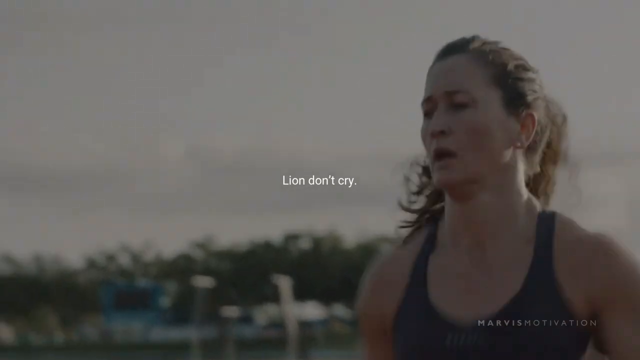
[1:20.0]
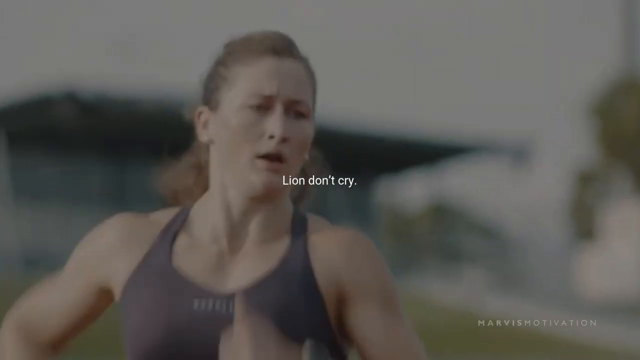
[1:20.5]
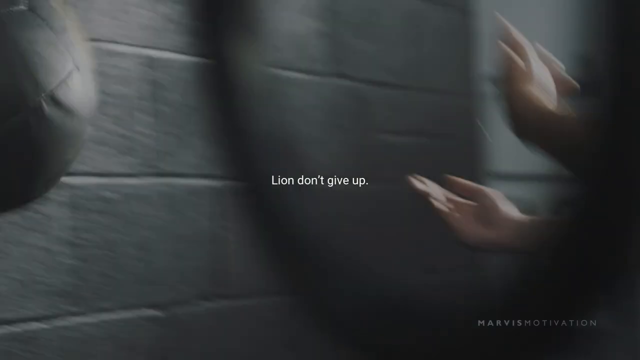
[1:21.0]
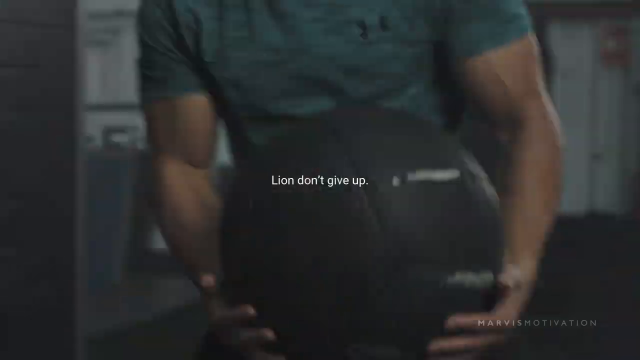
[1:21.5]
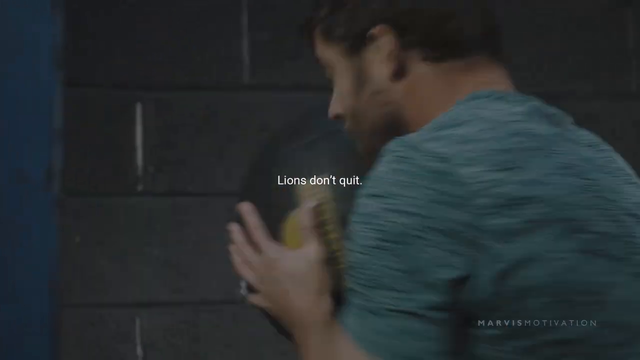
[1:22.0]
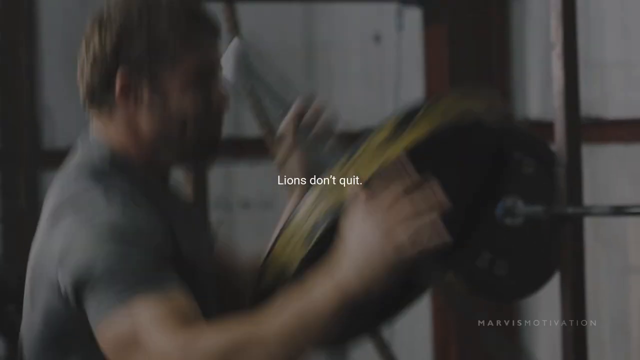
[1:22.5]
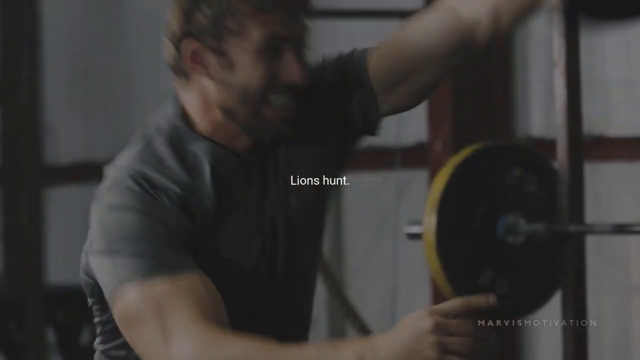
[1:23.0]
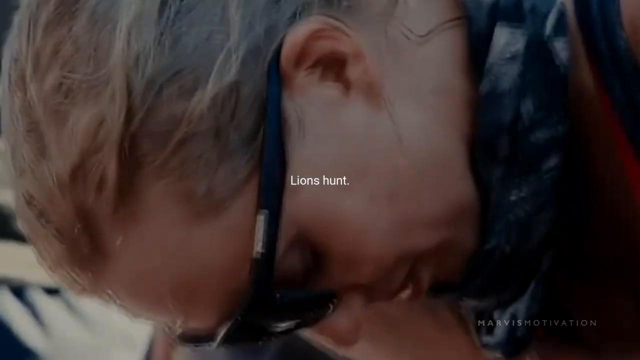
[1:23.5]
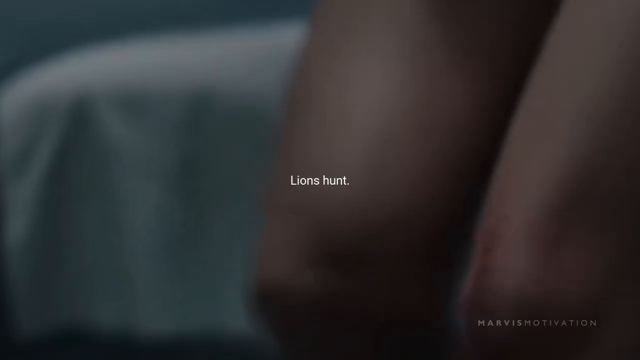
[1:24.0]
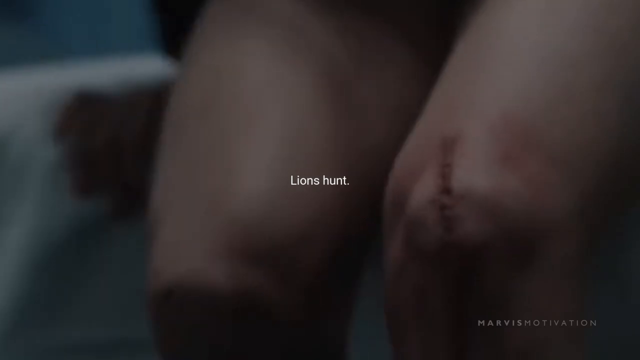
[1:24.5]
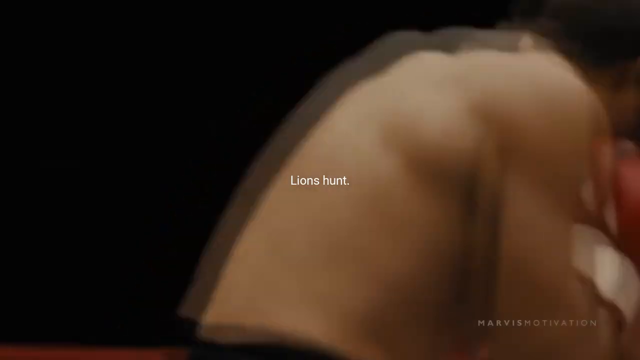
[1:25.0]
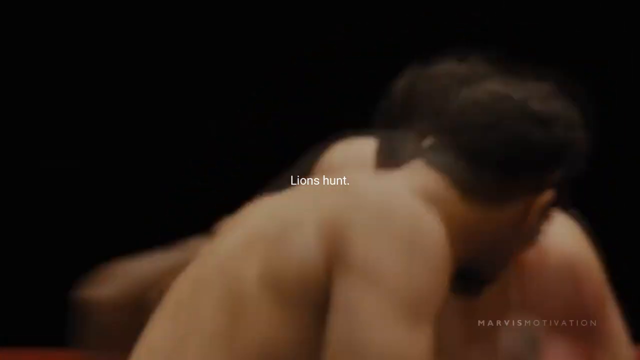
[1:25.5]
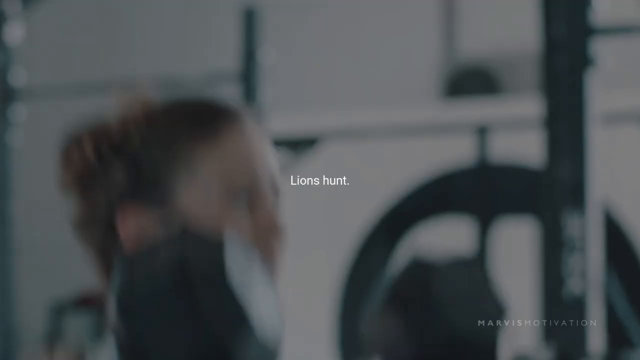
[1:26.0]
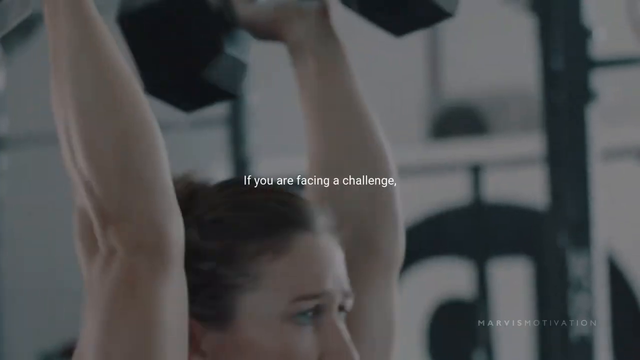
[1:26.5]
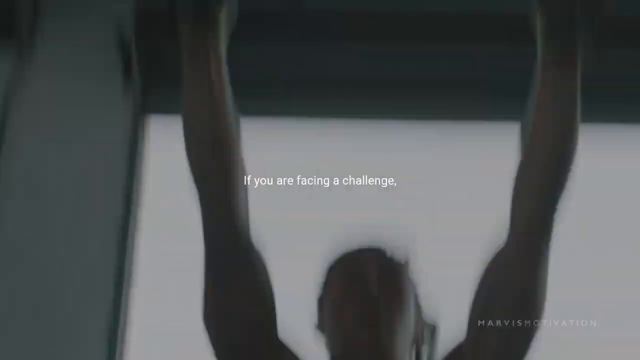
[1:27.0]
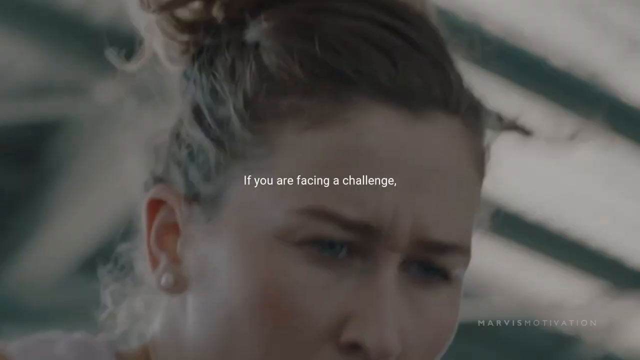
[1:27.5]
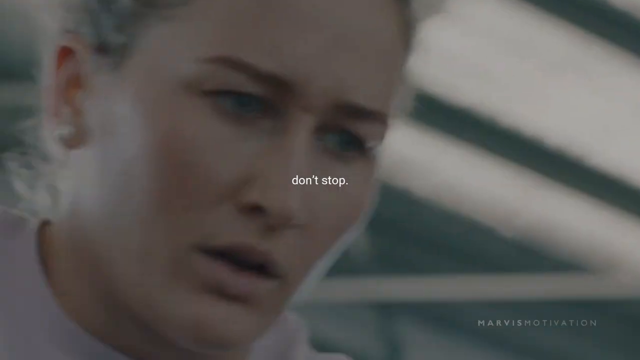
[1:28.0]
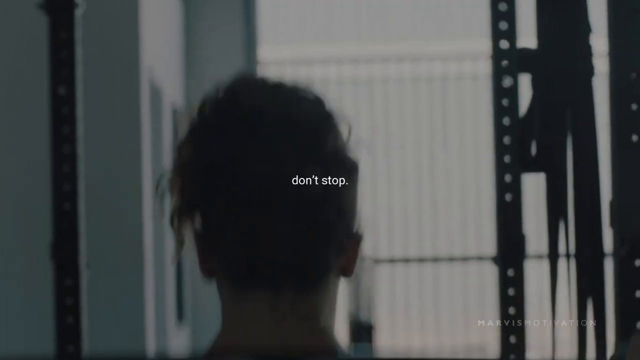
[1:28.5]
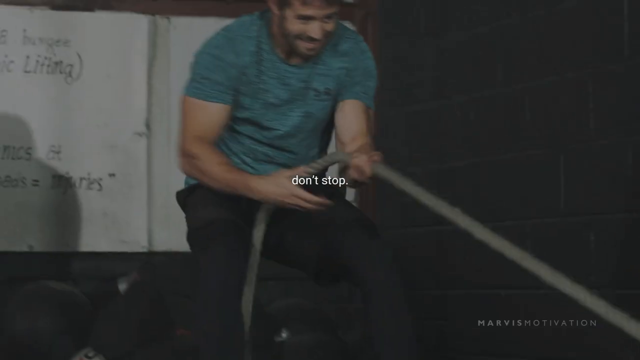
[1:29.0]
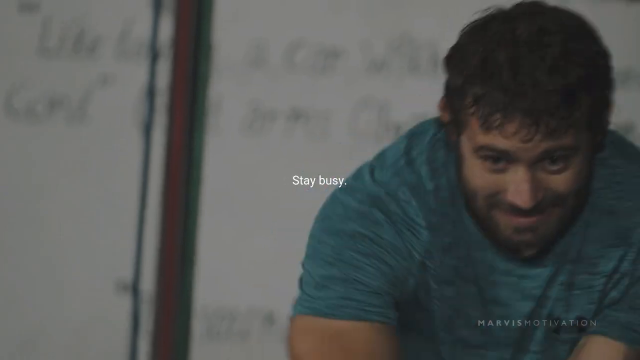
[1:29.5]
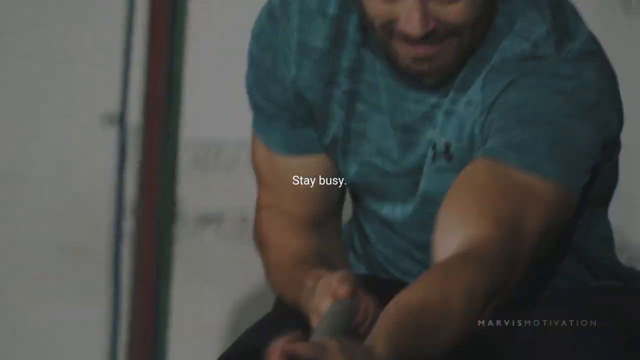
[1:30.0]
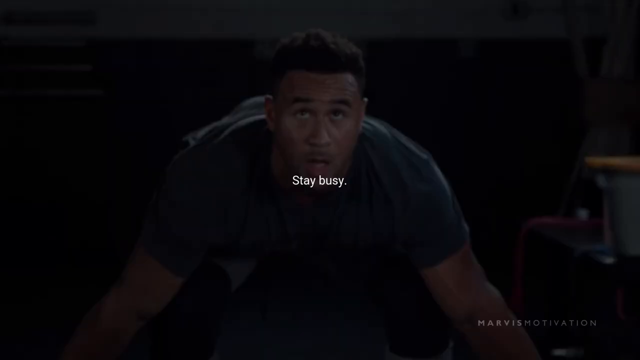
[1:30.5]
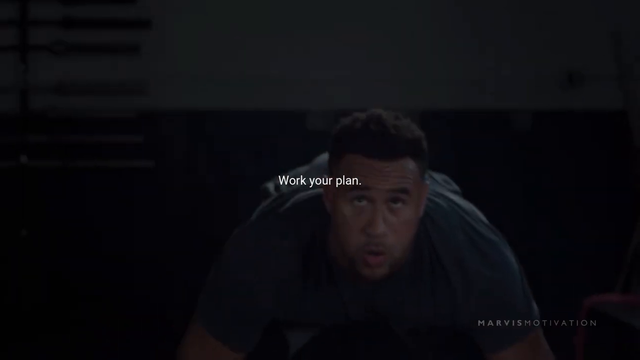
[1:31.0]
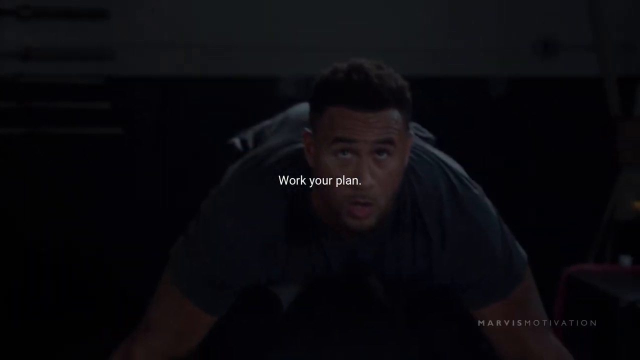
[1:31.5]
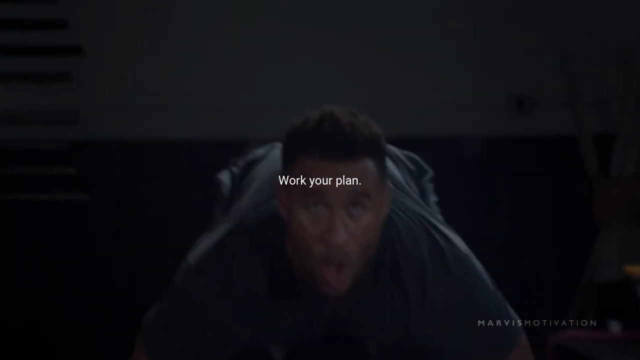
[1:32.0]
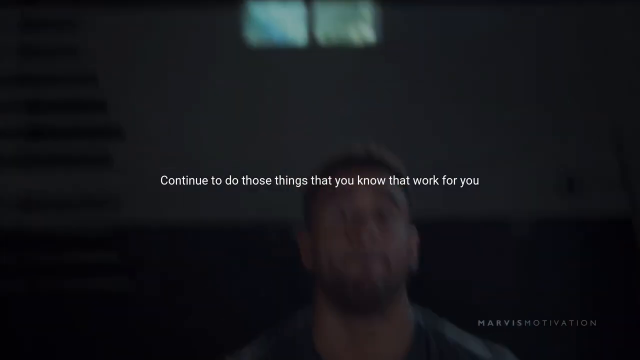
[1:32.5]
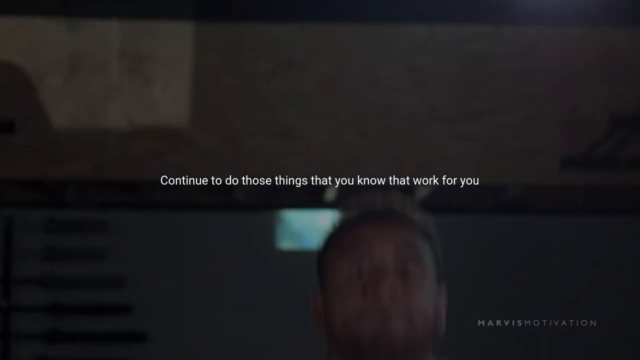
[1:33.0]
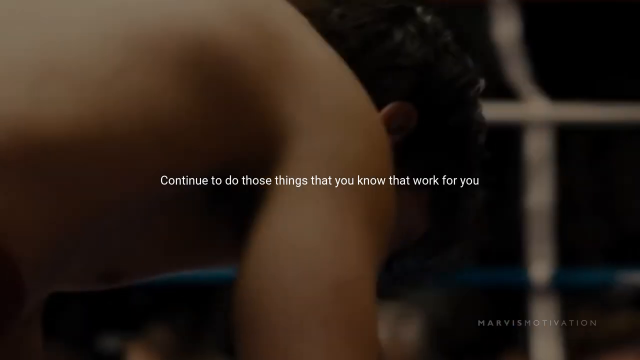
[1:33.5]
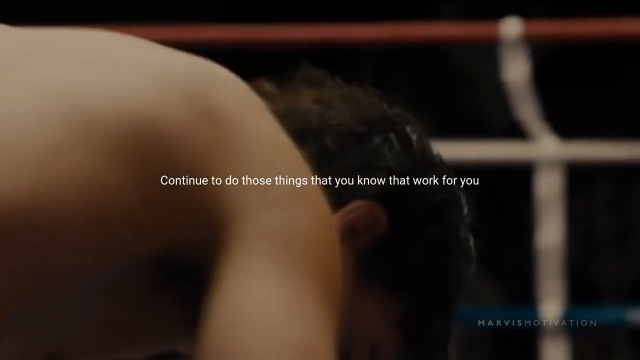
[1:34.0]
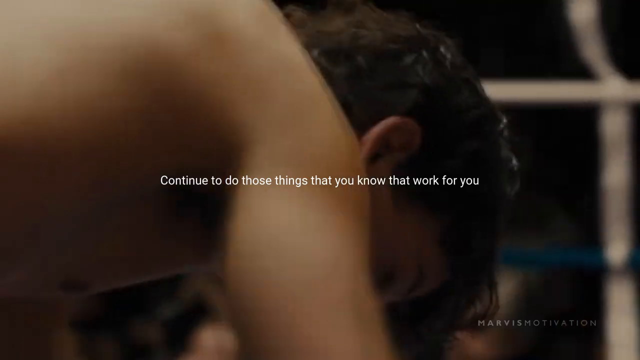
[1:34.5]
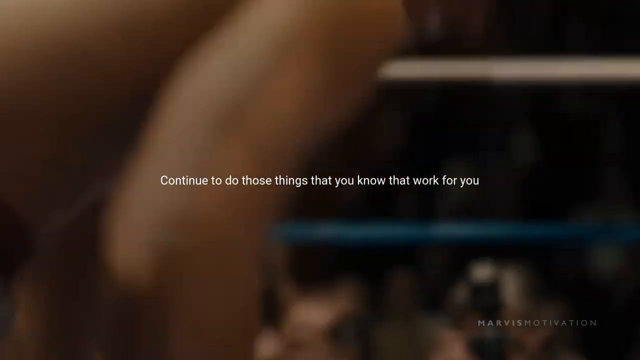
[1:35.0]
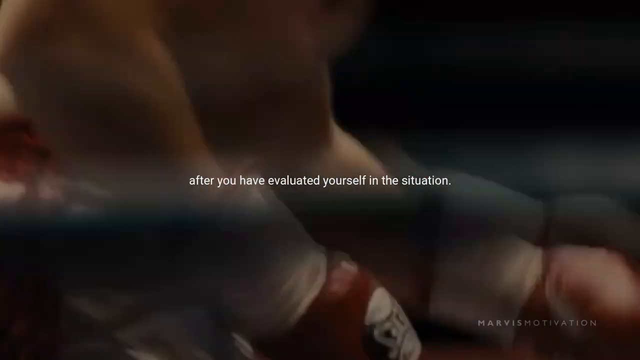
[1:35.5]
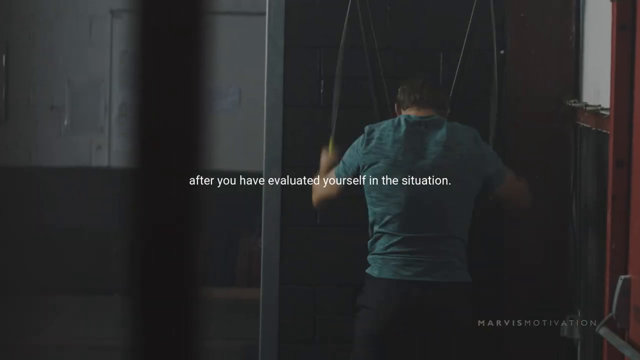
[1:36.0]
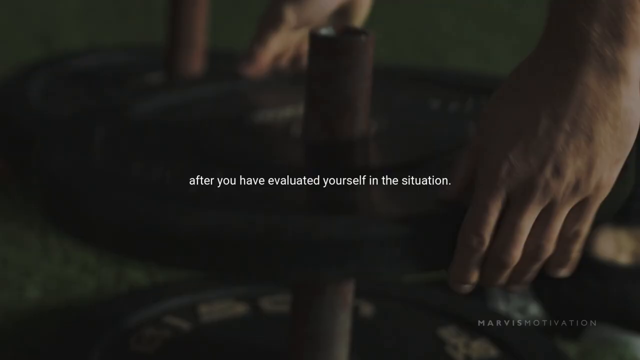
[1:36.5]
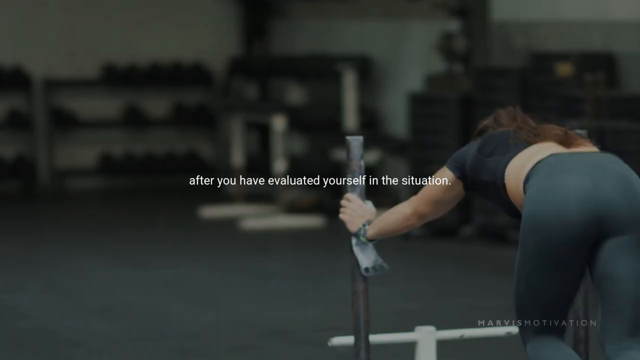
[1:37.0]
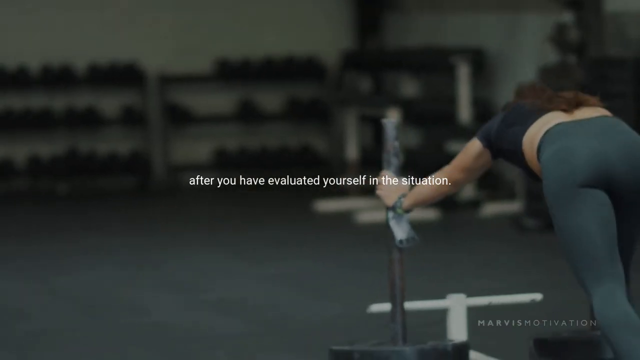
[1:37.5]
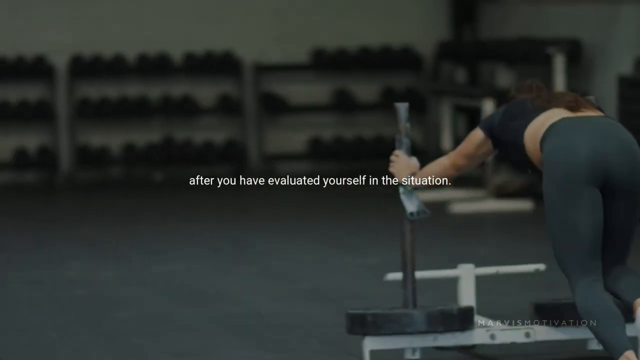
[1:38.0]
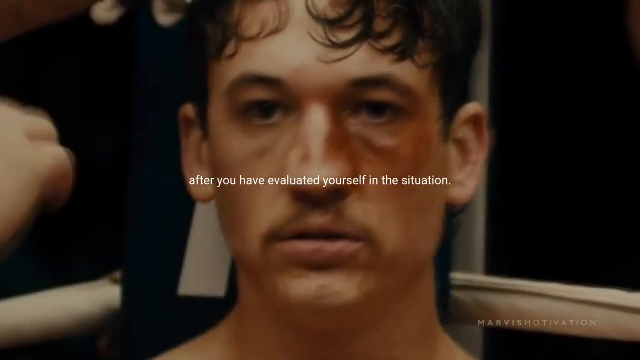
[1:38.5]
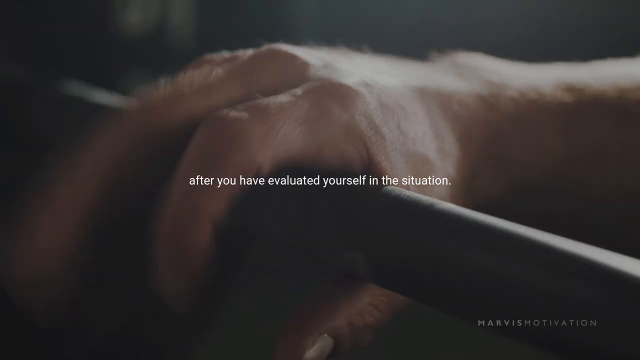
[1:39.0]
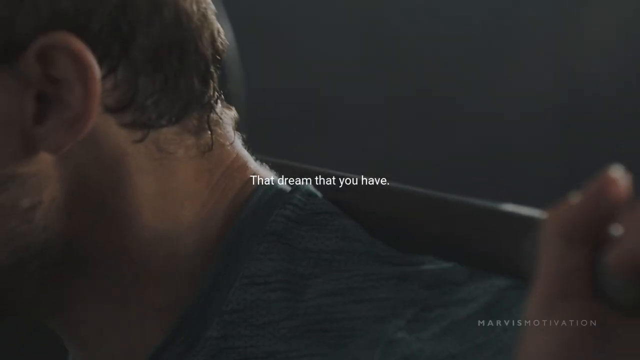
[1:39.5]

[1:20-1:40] A female with brown hair in a black shirt appears, followed by shots of a ball being moved around, weights being moved around, and a subject pulling weights. A man says "walk as planned, continue to do those things that you know that work for you." Screens show "after you have evaluated yourself in the situation, that dream becomes a reality," alongside people working out across multiple screen transitions featuring many different people. Several white text screens appear, and Miles Teller, an actor, is shown in a sort of arena.